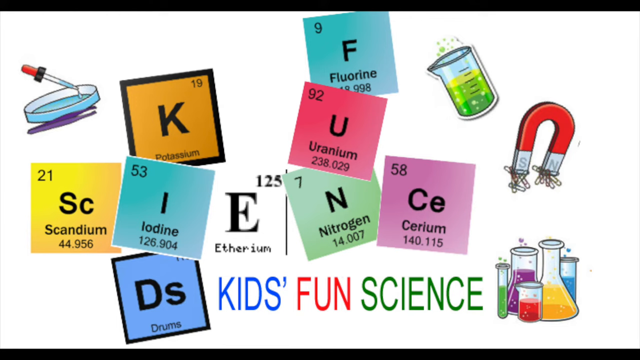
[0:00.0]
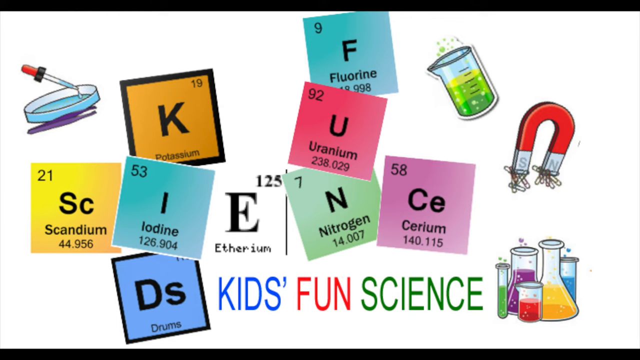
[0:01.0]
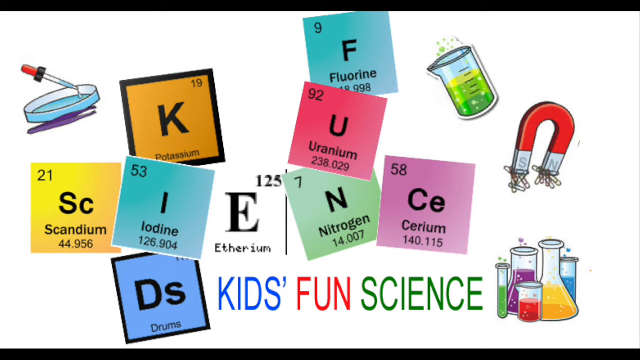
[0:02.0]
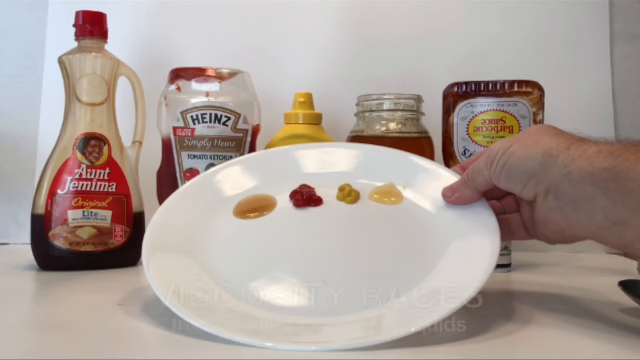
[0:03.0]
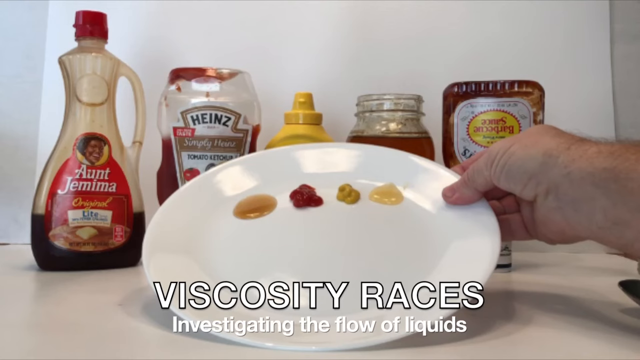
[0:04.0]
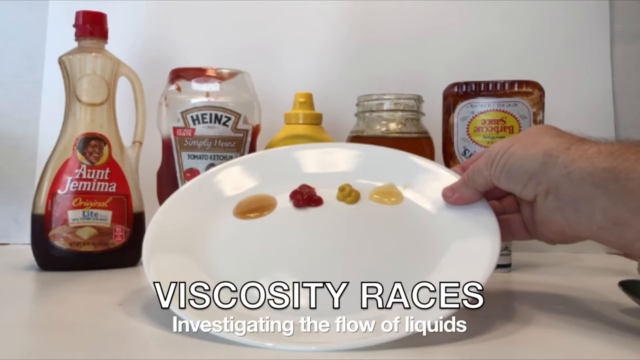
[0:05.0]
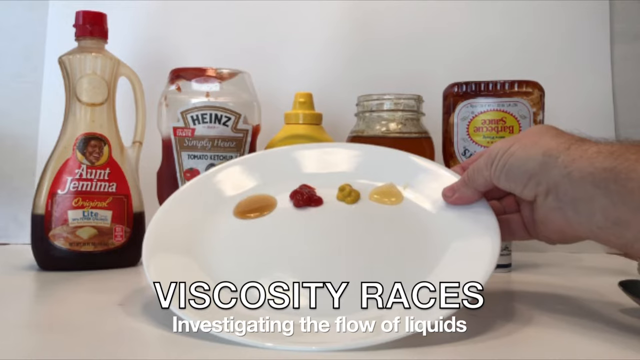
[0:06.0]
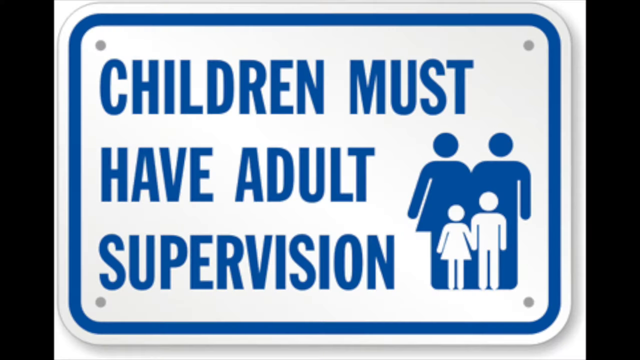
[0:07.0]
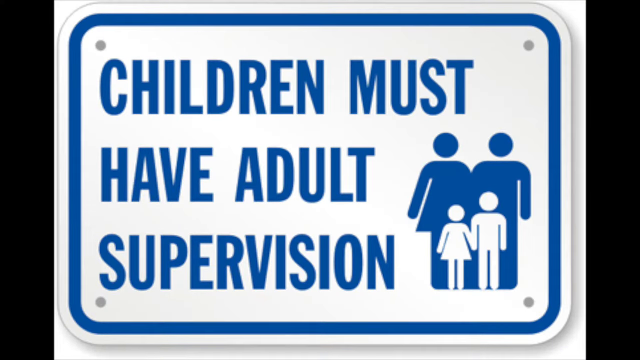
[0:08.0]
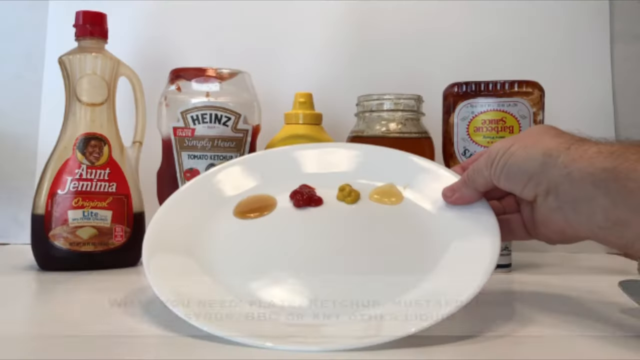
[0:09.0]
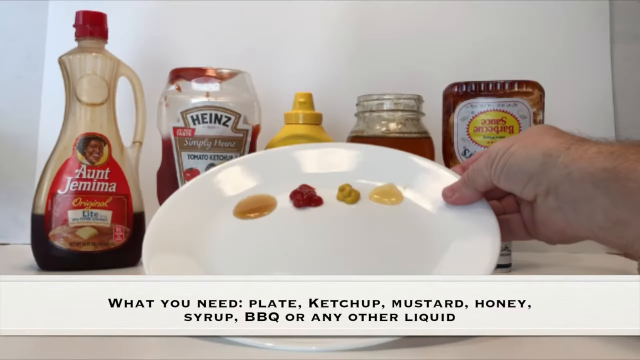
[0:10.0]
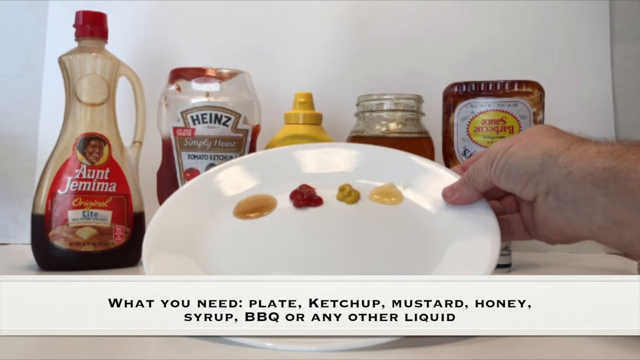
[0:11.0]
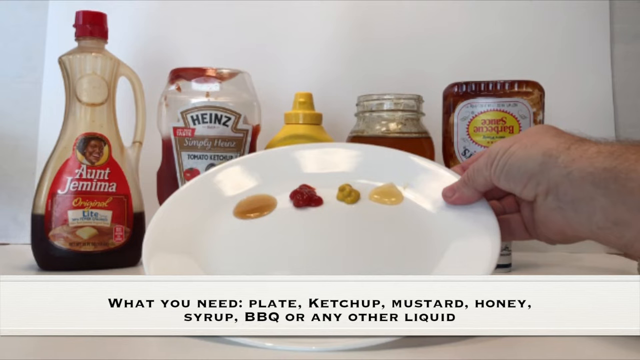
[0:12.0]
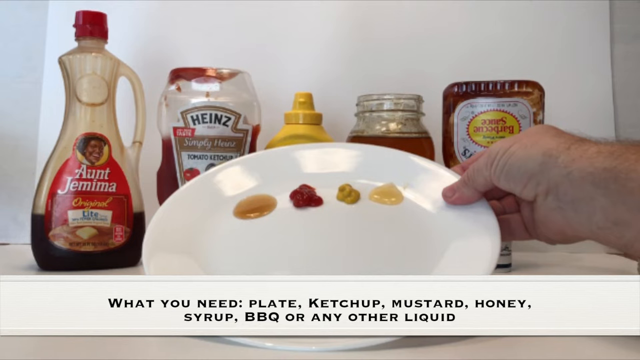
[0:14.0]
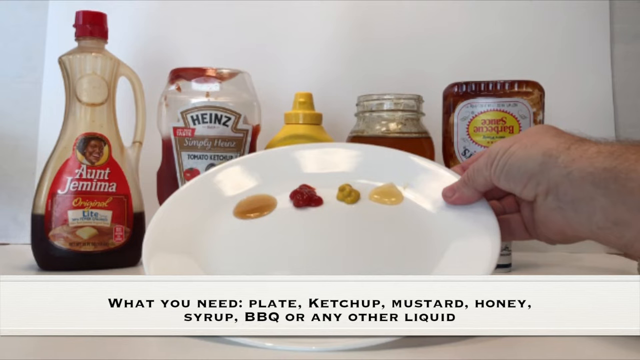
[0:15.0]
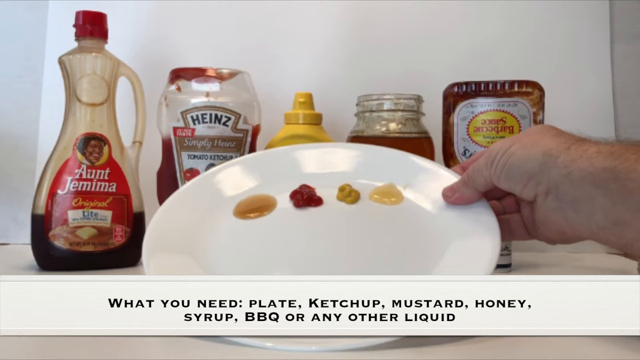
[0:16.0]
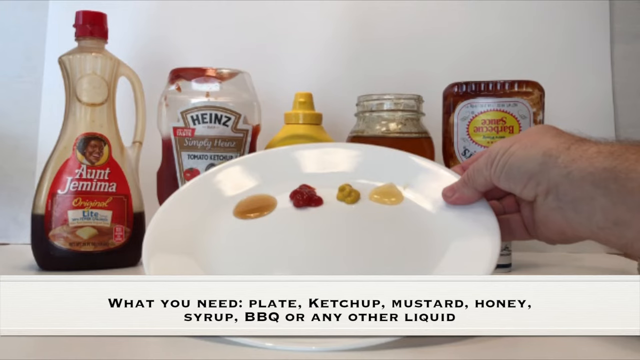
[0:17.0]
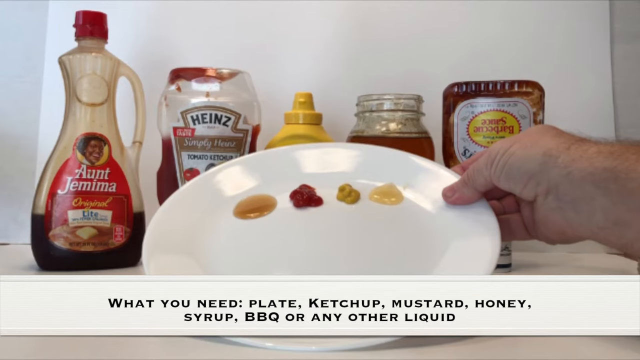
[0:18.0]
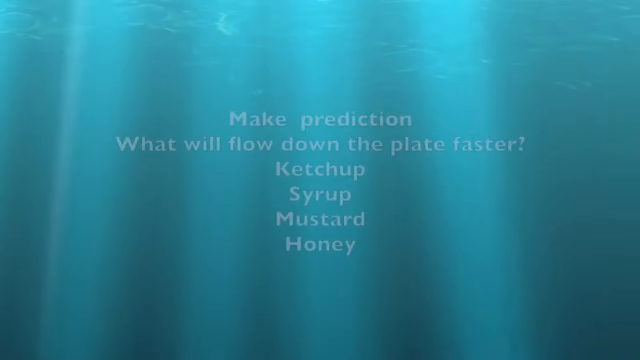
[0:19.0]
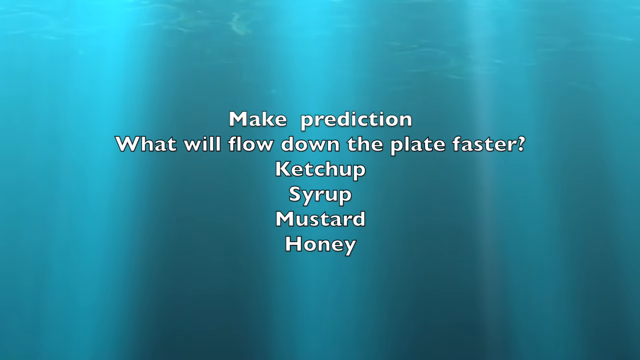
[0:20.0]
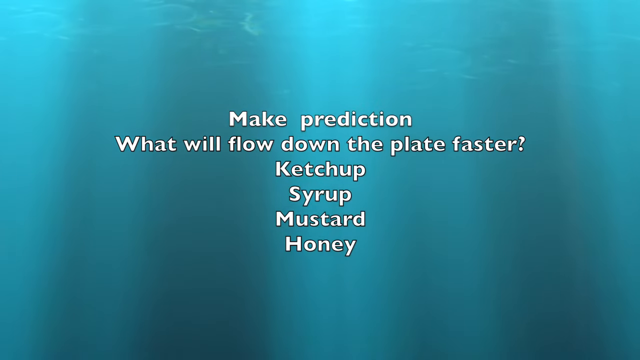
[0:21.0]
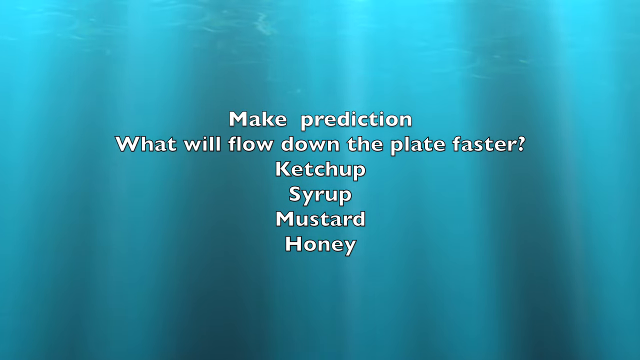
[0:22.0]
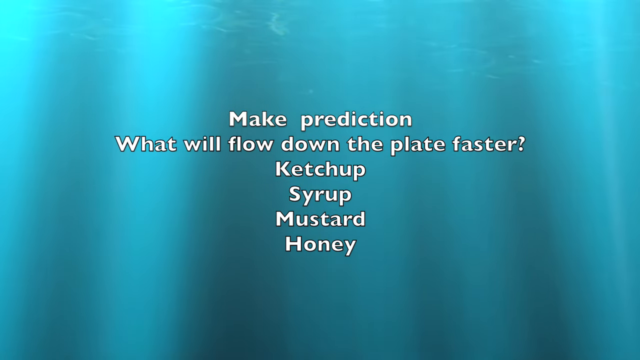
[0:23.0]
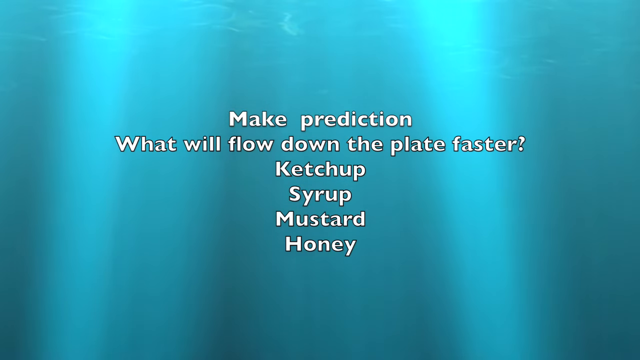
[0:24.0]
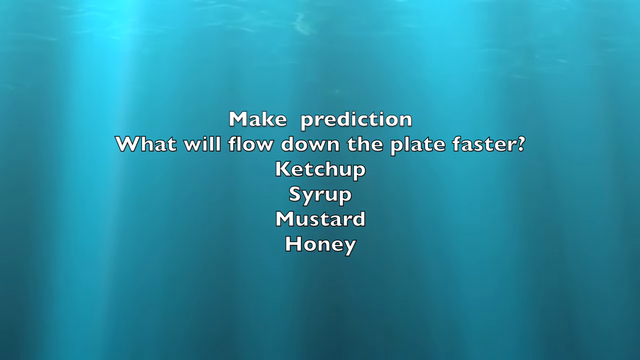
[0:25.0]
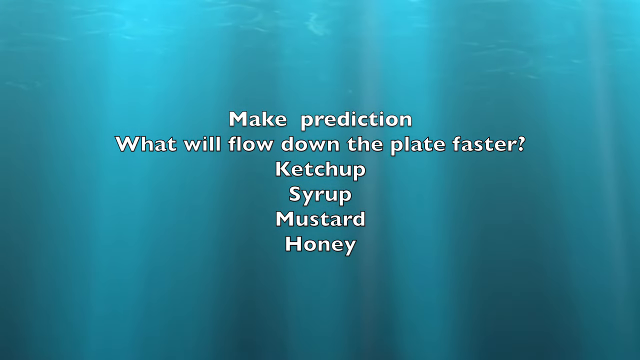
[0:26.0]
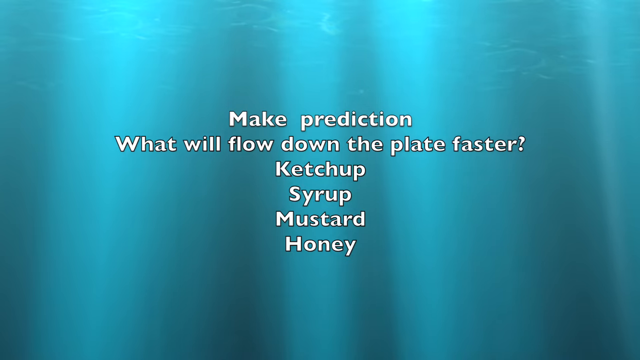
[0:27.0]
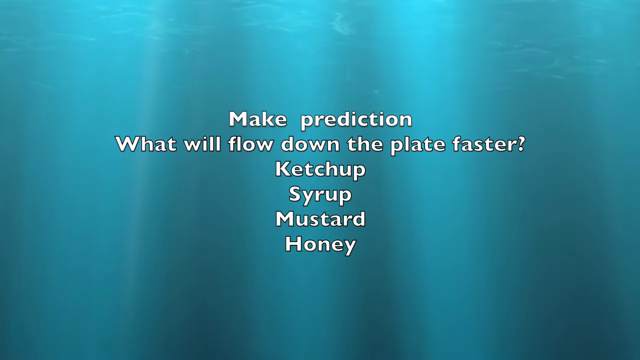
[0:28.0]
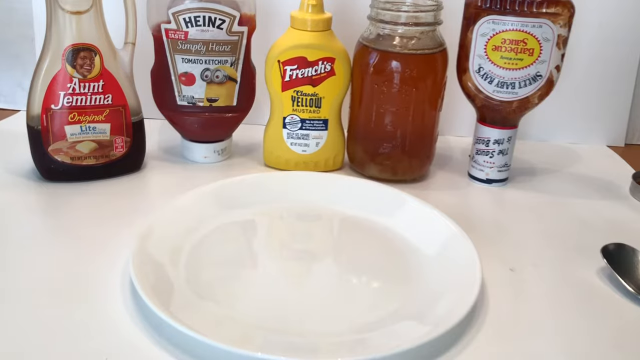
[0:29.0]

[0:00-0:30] The video opens with text reading "kids on science" alongside small postcards showing element symbols: Sc for scandium, I for iodine, Ds, K for potassium, F for fluorine, U for uranium, N for nitrogen, and Ce for cerium. Text then reads "viscosity races, investigating the flows of liquids" and "children must have adult supervision while doing this." A list reads "what you need, a plate, ketchup, mustard, honey, syrup, barbecue sauce, or any other condiment." Four different condiments are on a plate; from left to right they appear to be honey, ketchup, syrup, and mustard. Behind the plate are the condiments in their bottles, from left to right: syrup, ketchup, mustard, honey, and barbecue sauce. A man holds the white plate with his right hand.